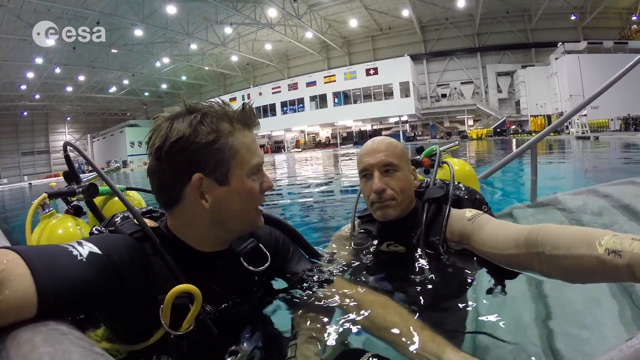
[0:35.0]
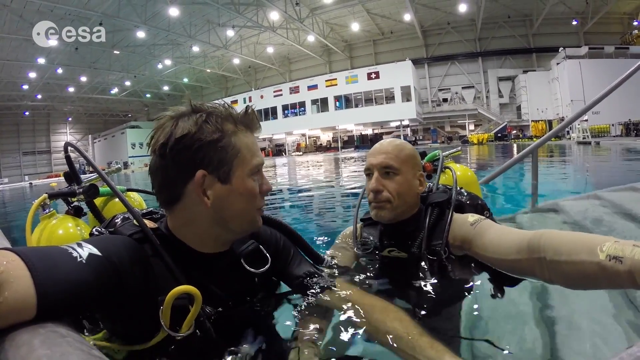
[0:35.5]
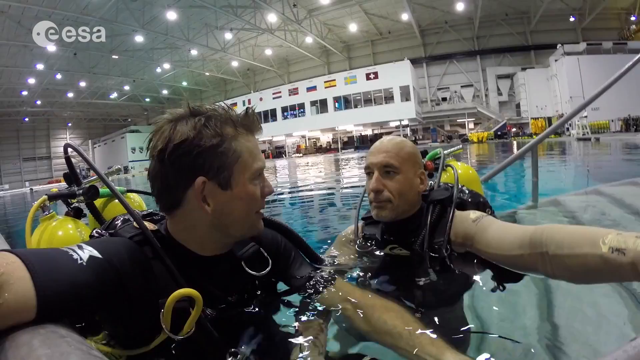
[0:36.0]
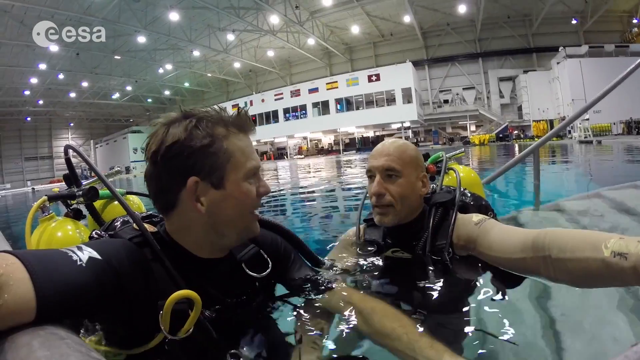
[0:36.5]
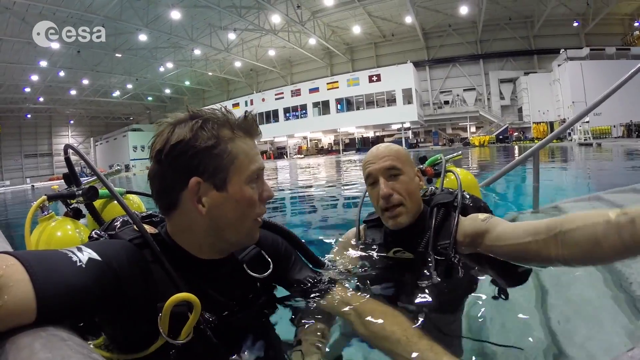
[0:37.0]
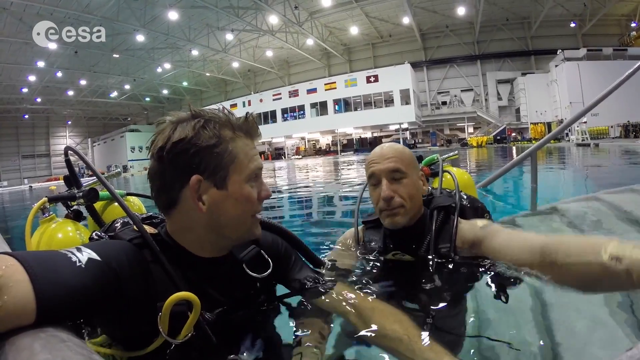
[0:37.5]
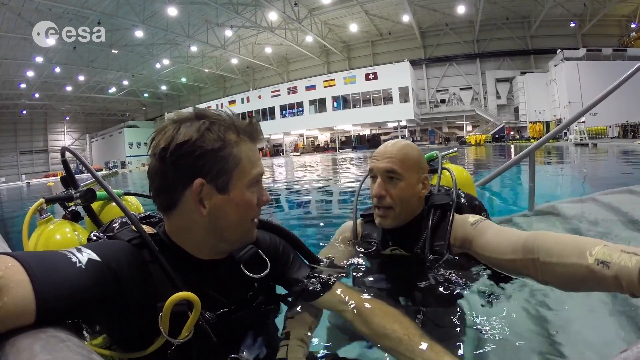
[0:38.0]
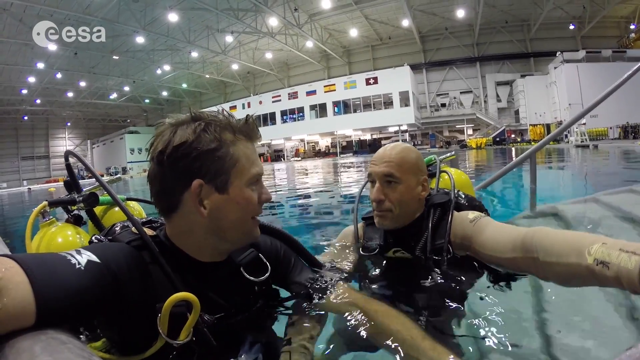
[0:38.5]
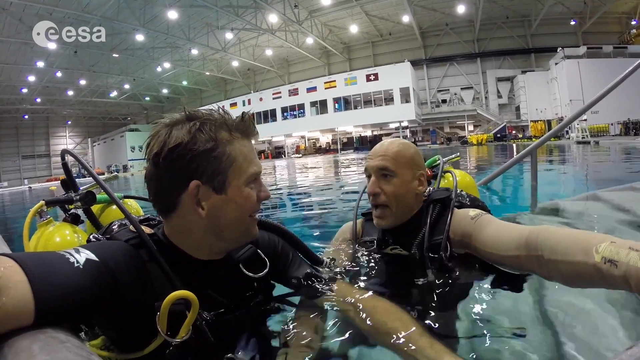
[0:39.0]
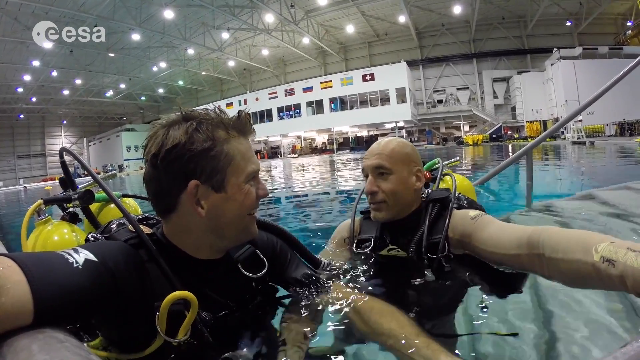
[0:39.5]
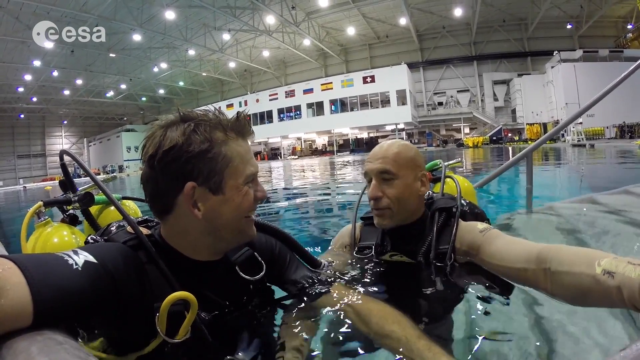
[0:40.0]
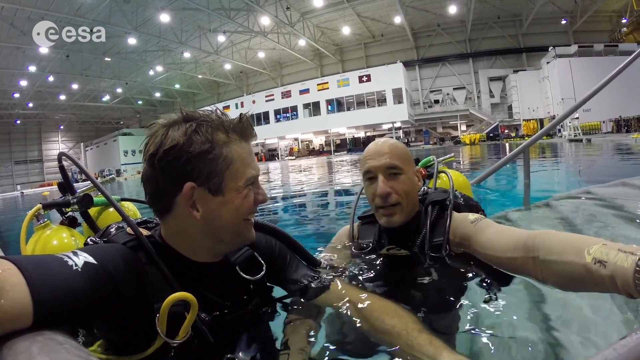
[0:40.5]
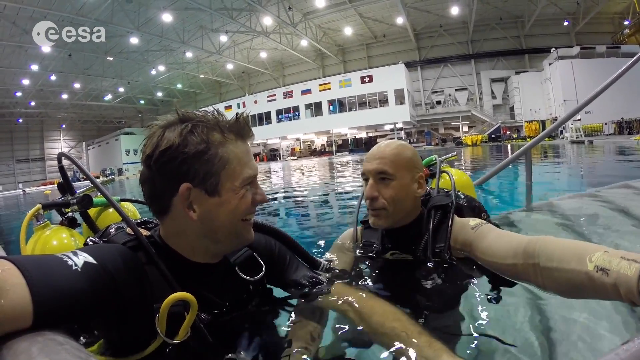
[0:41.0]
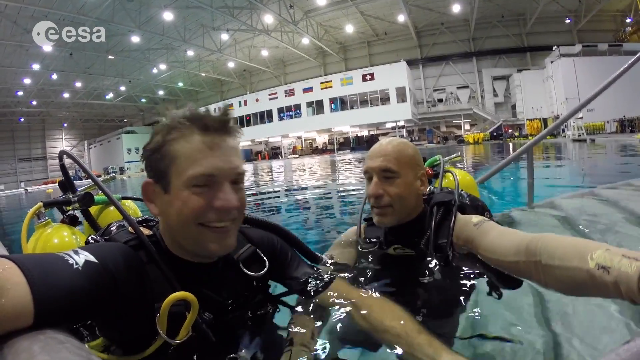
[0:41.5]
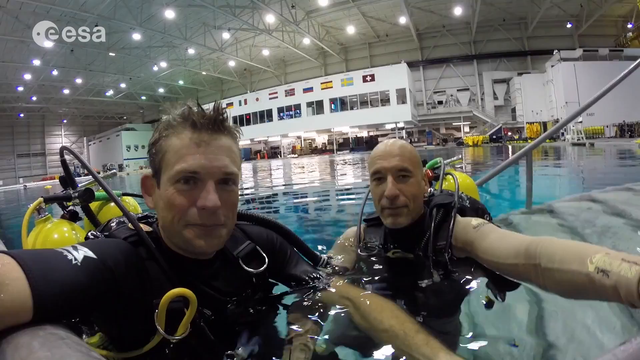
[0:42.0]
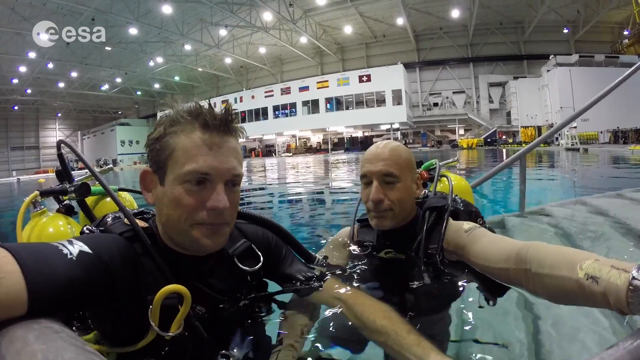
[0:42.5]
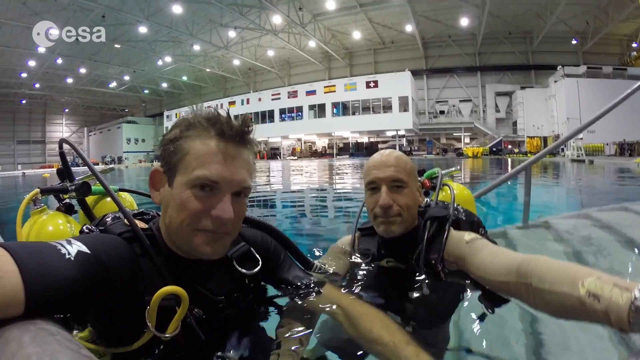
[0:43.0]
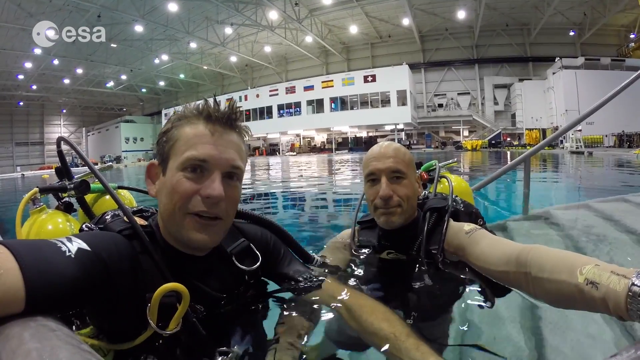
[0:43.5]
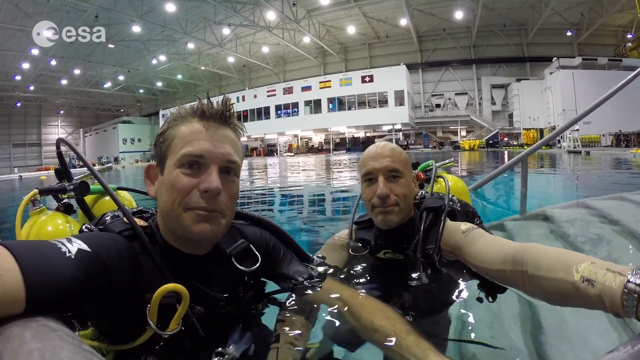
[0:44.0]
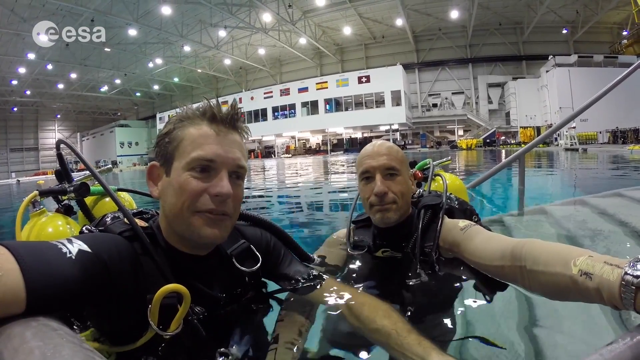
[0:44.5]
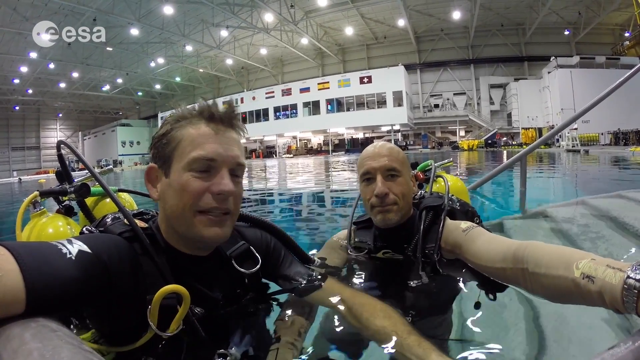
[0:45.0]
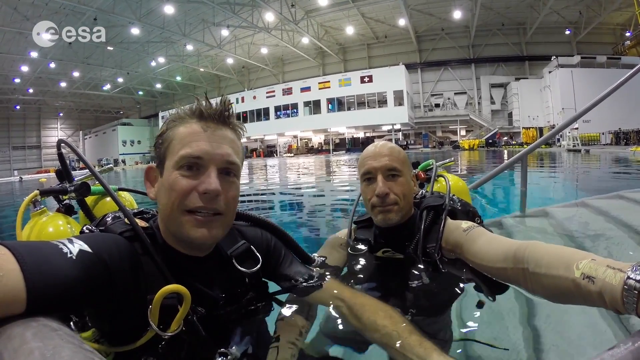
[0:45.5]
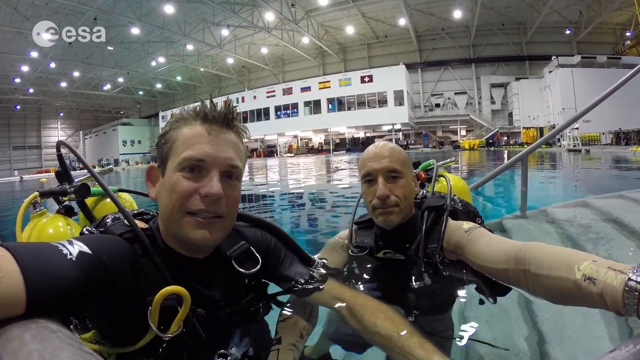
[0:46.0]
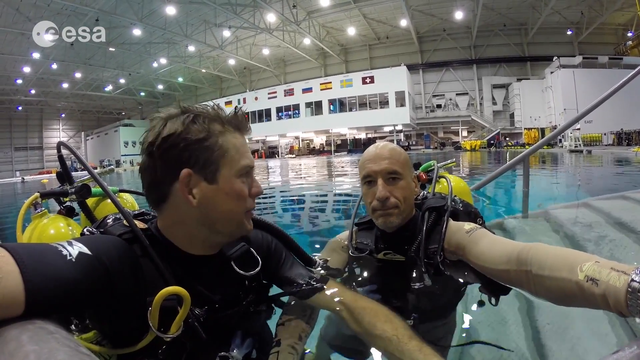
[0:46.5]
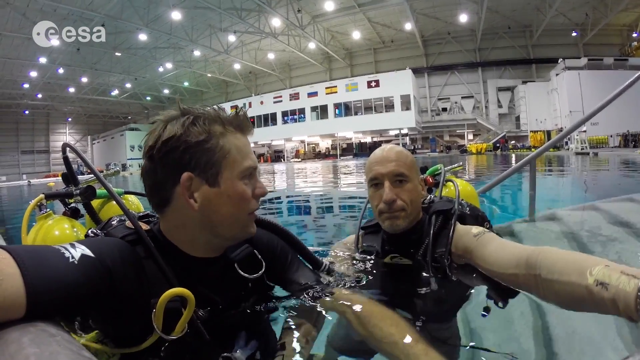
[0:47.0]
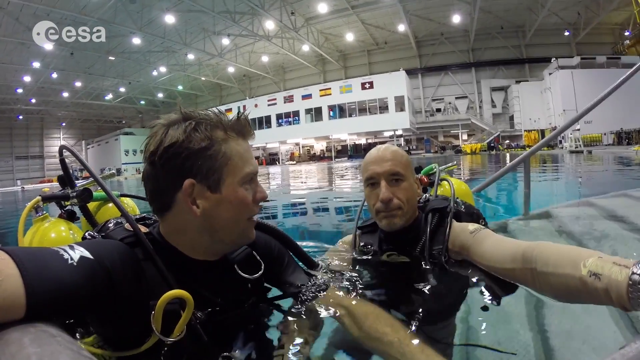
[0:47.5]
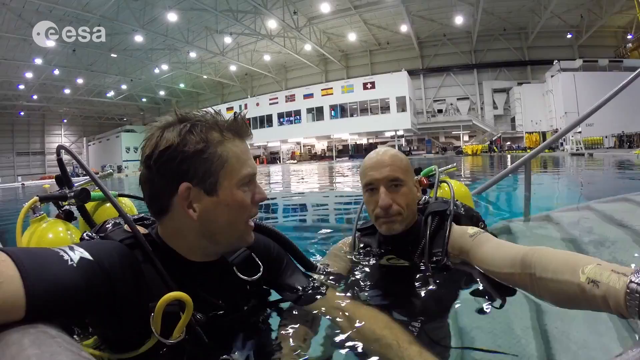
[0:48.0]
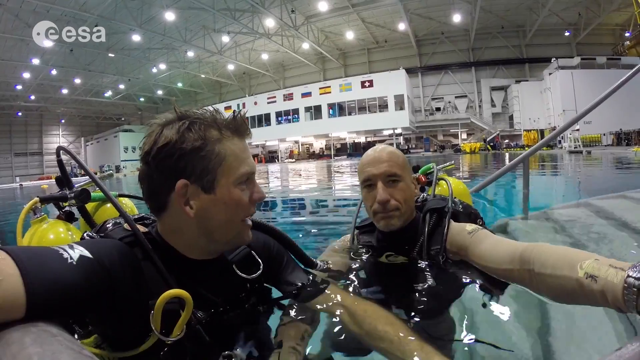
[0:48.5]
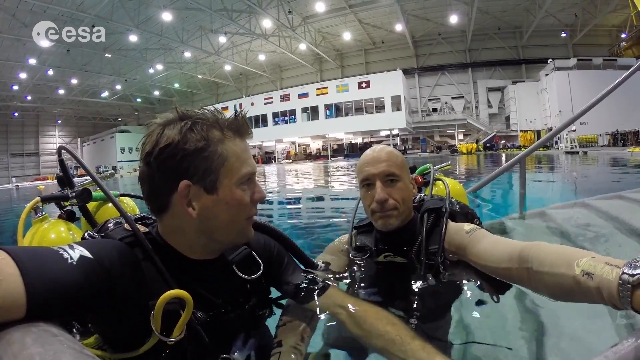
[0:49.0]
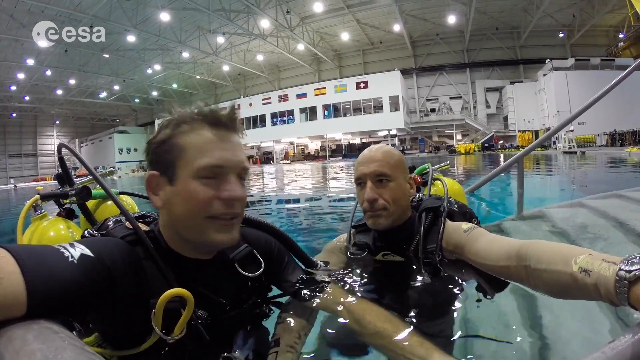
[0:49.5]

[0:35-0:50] The same two men stand in the pool, with the letters "EESA" in the upper left of the screen. Many lights are on the ceiling of the building. The man on the left apparently holds the camera, and his wetsuit is short-sleeved. The tanks on their backs are very big. They look at each other, talk, and sort of laugh and smile. The man on the right is bald and seems to wear a tank-style, sleeveless wetsuit; tattoos show on his arm, and he wears a watch on his left wrist. He lifts his hand and holds his arm out, so he is not the one holding the camera. A few people walk around in the background, so far away on the other side that they show only as a little movement.